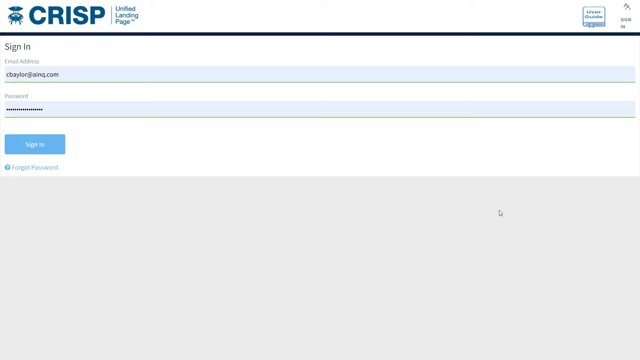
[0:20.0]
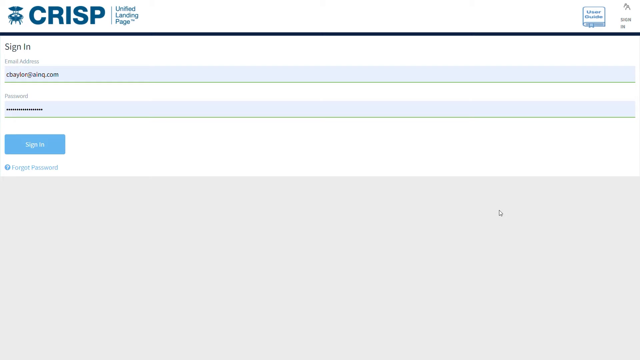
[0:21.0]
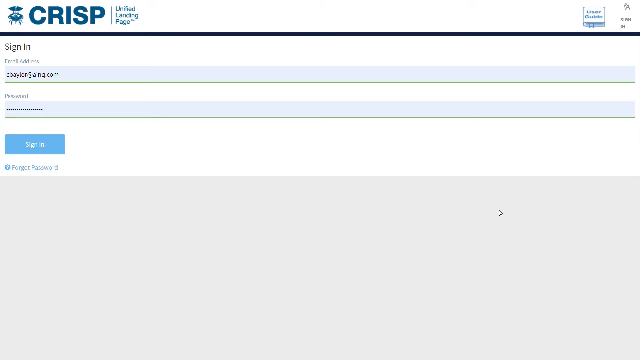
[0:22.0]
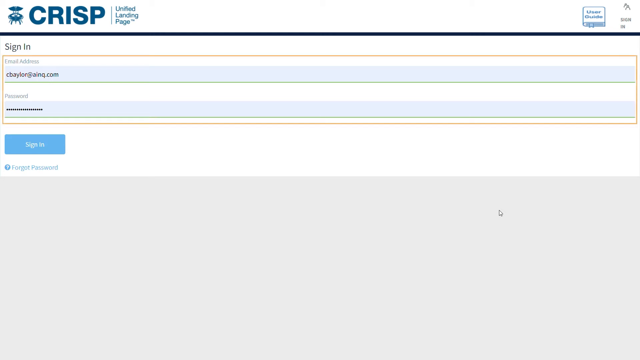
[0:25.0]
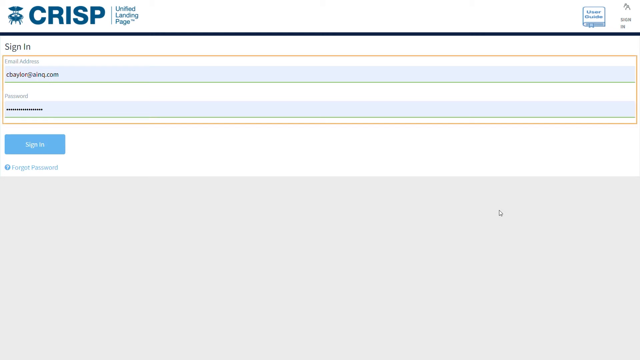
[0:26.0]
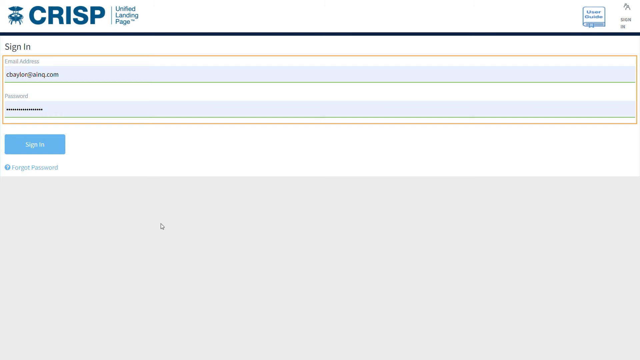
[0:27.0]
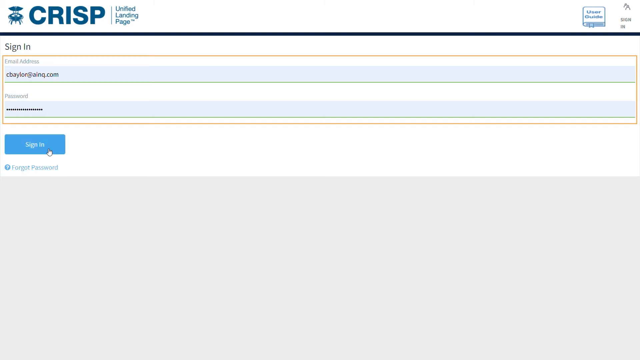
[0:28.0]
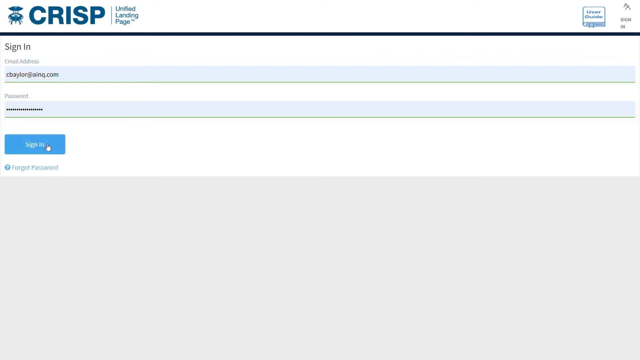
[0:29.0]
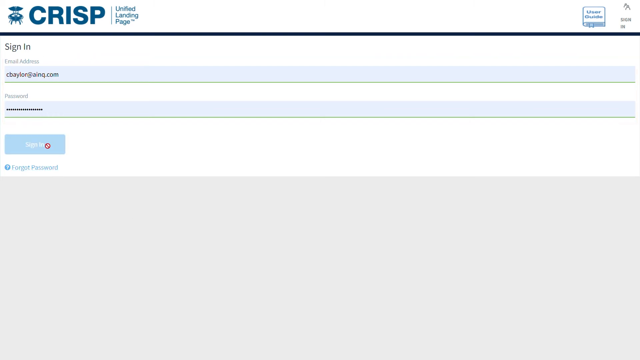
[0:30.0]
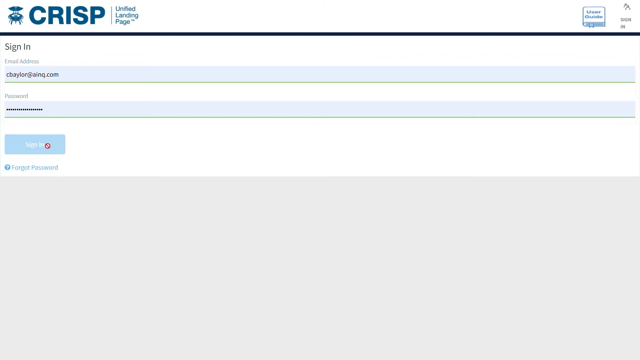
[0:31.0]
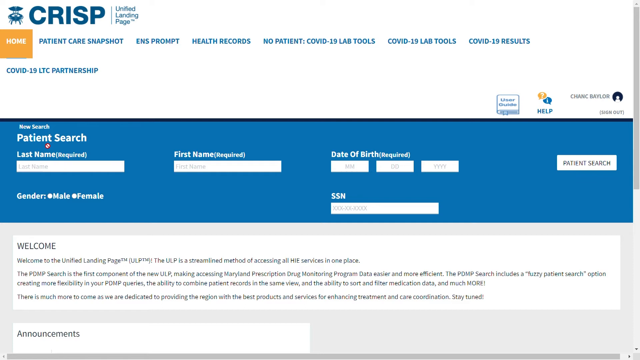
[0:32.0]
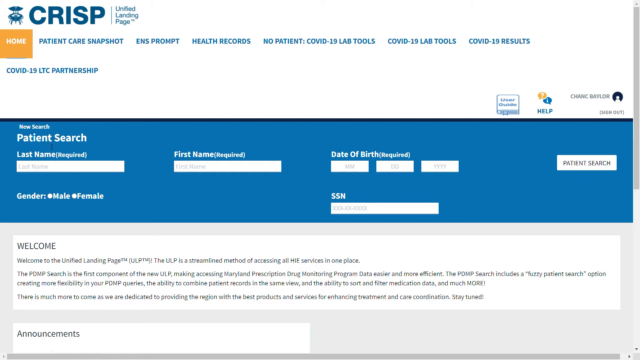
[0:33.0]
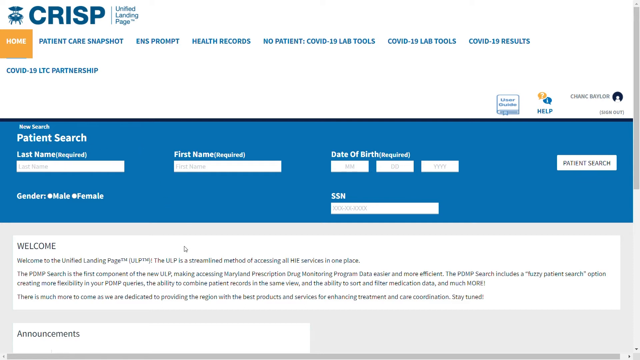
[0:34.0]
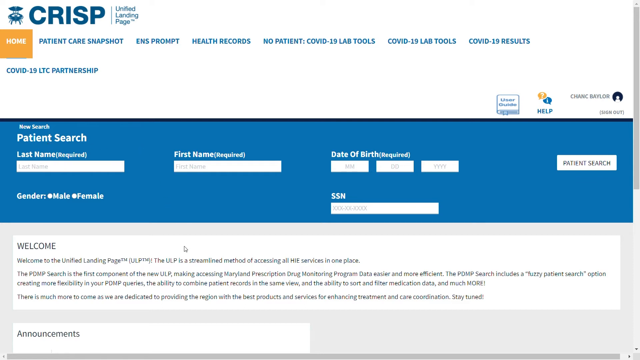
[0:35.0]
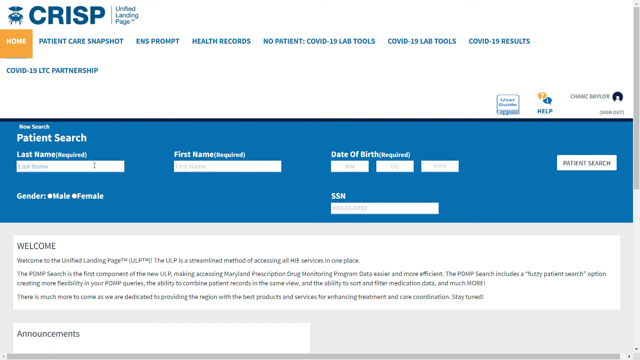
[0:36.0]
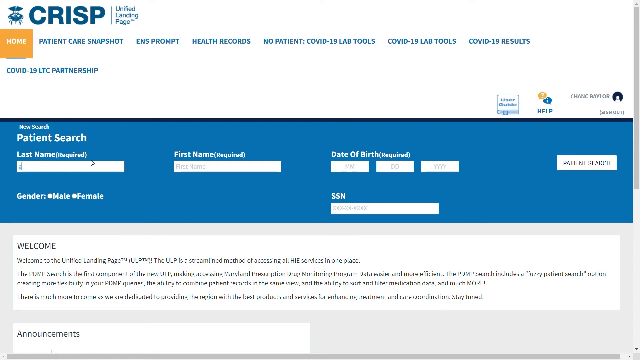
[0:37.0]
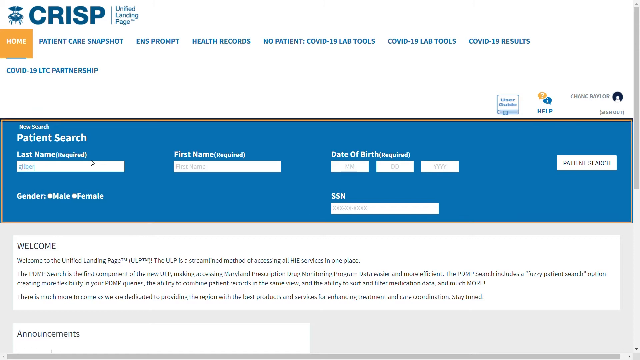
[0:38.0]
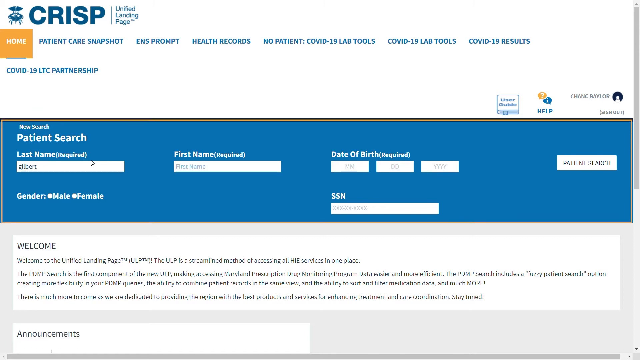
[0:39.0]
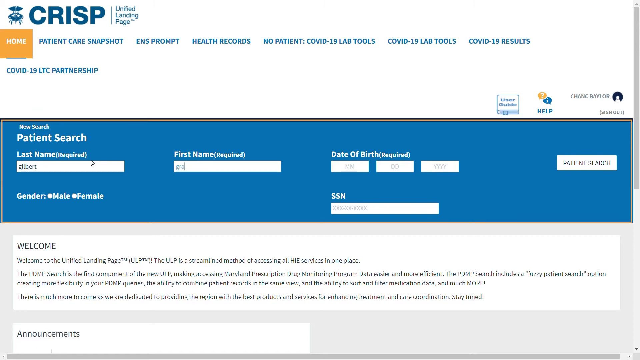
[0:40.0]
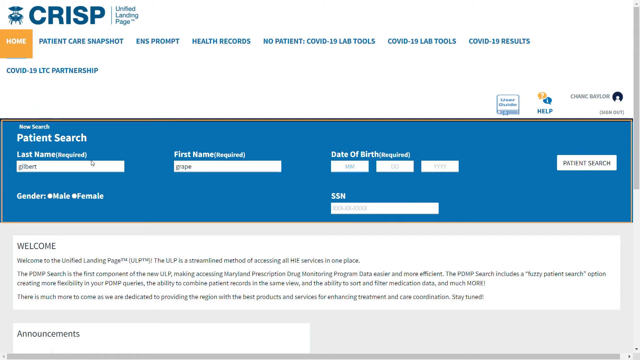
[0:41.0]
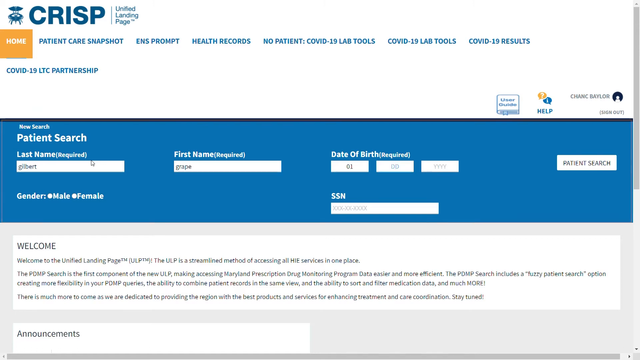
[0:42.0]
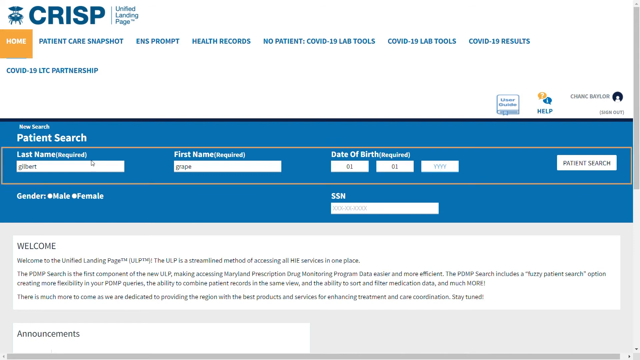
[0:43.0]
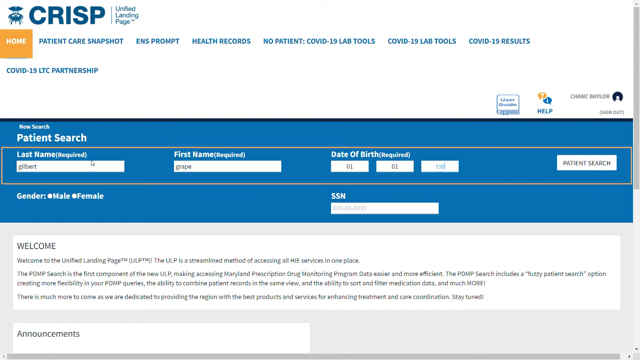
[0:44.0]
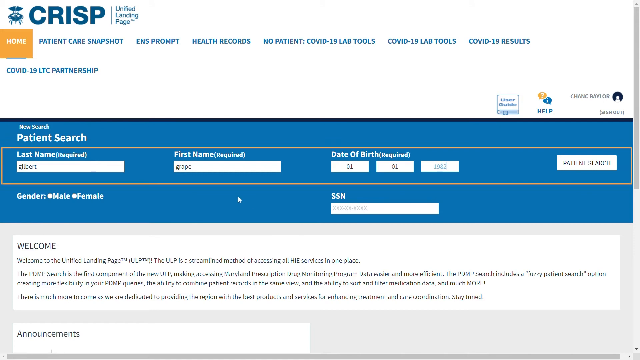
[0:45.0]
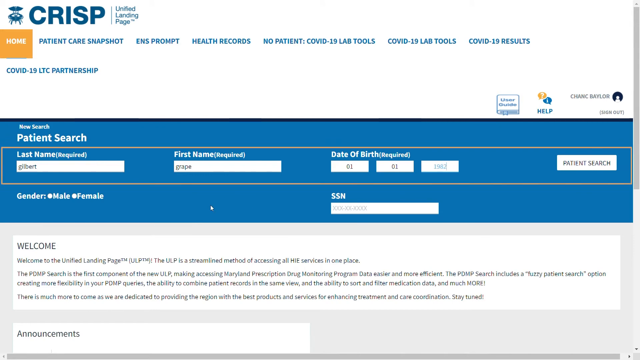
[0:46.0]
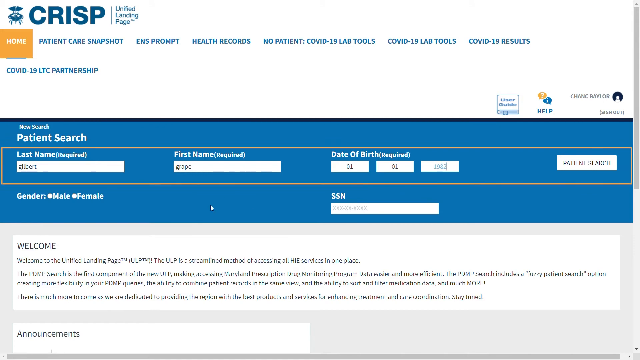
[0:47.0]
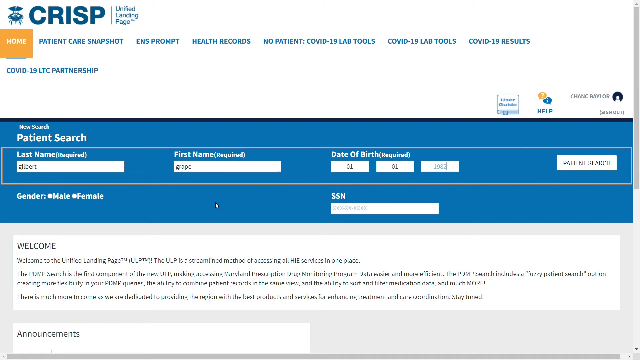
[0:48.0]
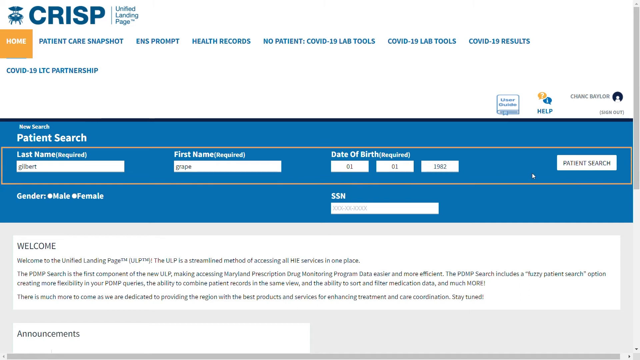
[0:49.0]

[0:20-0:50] The sign-in page has little on it: a sign-in option with empty password and email address fields. The header at the top left reads "CRISP United Landing page." A cursor clicks sign-in, which leads to a patient search page reading "patient search," with fields for last name (required), first name (required), birth date (required) and social security number, plus a welcome paragraph. The patient search section is in blue. The cursor moves and then stops. An example is typed in, search is clicked, and the page stops there. The video then returns to the sign-in page.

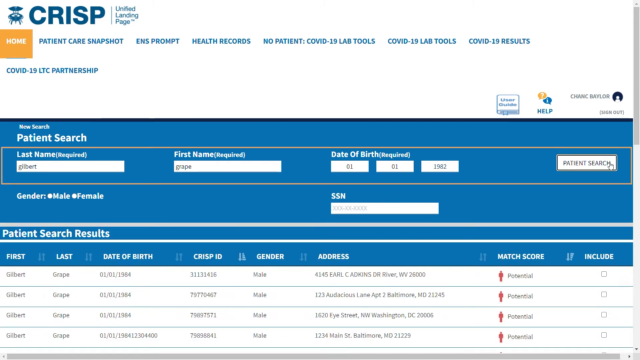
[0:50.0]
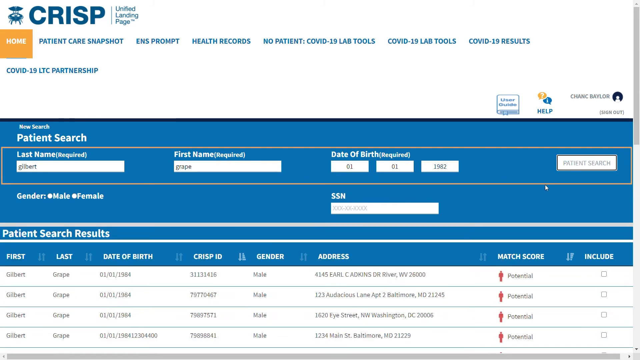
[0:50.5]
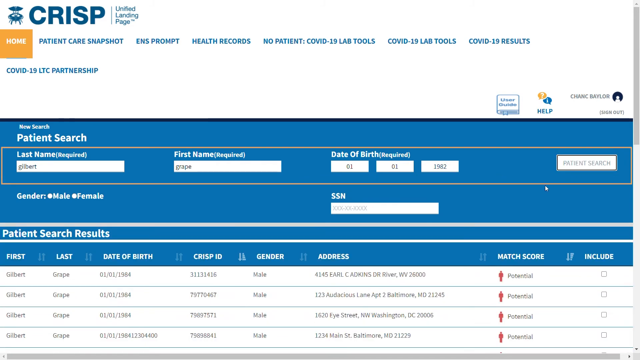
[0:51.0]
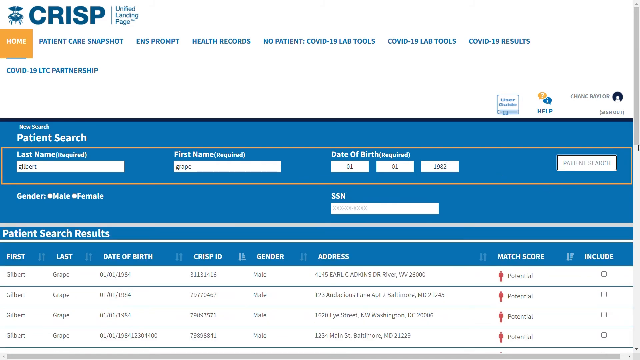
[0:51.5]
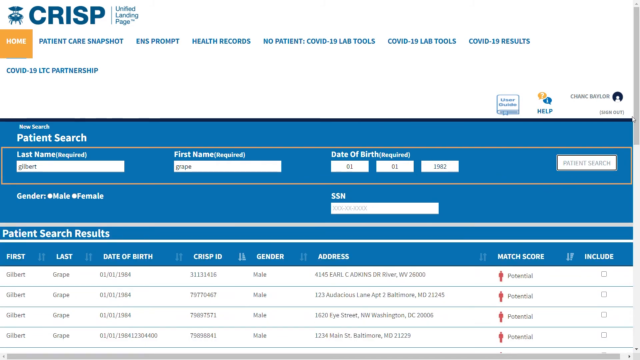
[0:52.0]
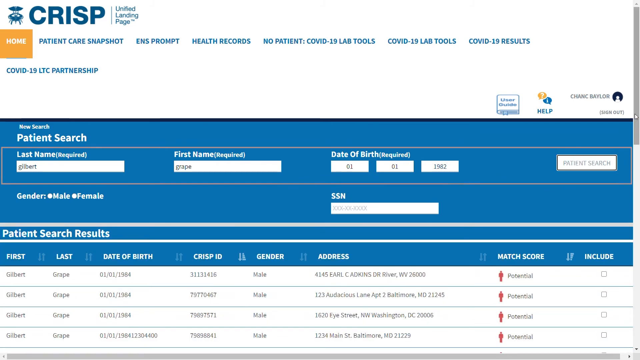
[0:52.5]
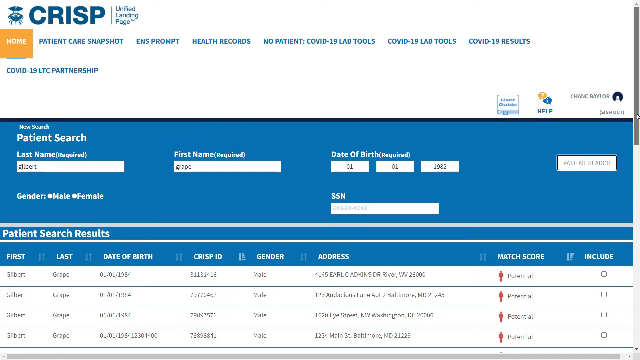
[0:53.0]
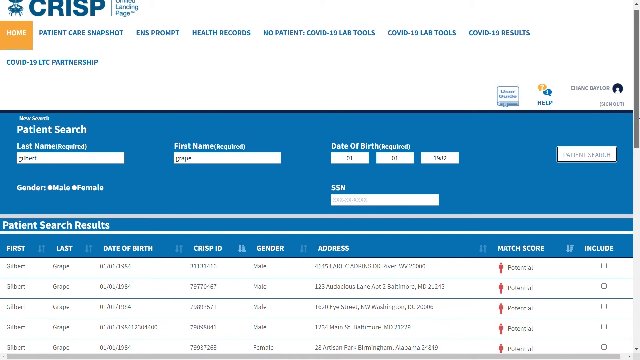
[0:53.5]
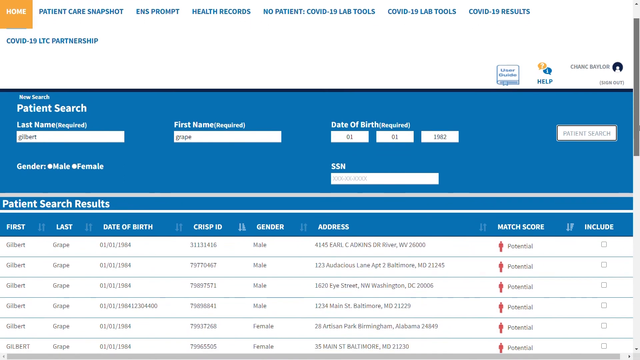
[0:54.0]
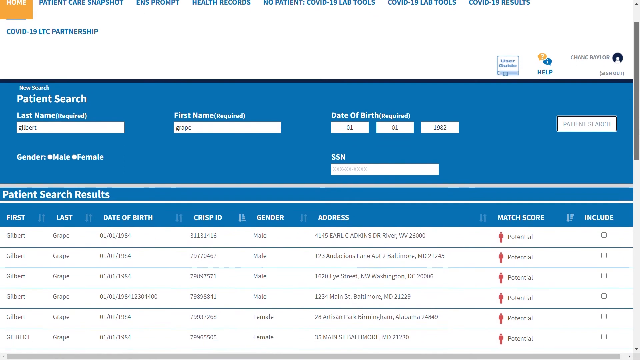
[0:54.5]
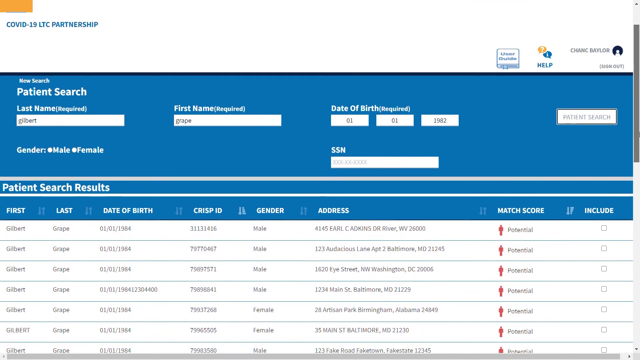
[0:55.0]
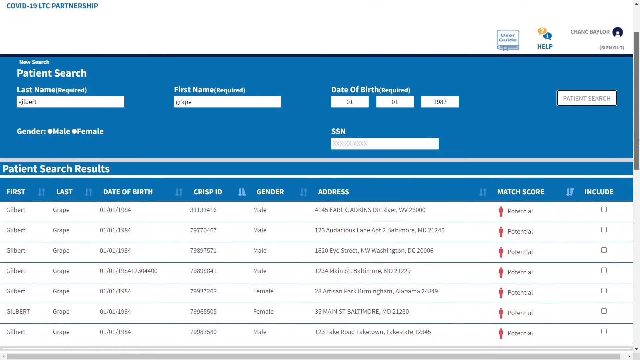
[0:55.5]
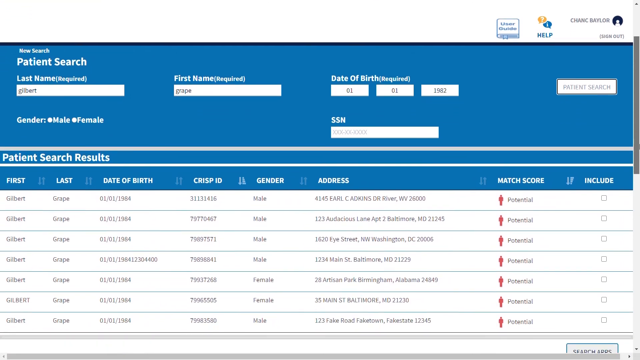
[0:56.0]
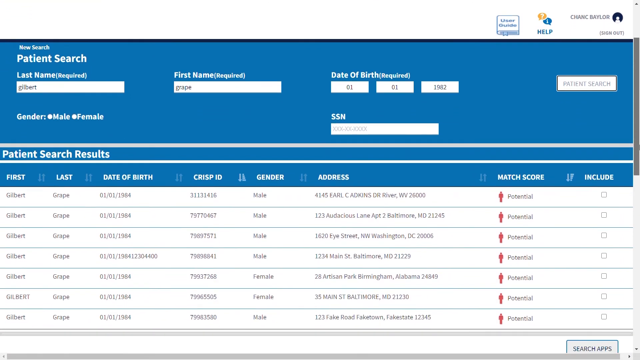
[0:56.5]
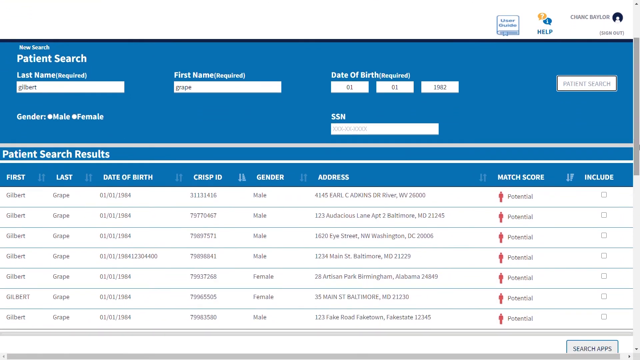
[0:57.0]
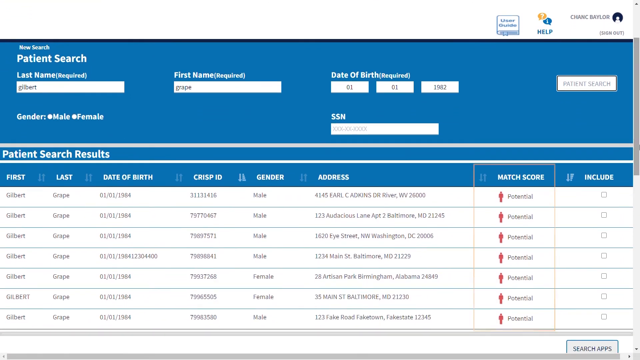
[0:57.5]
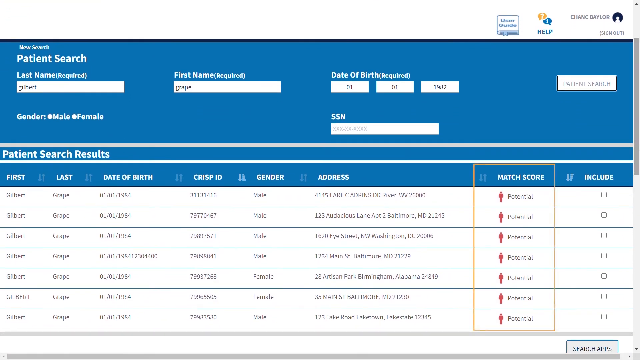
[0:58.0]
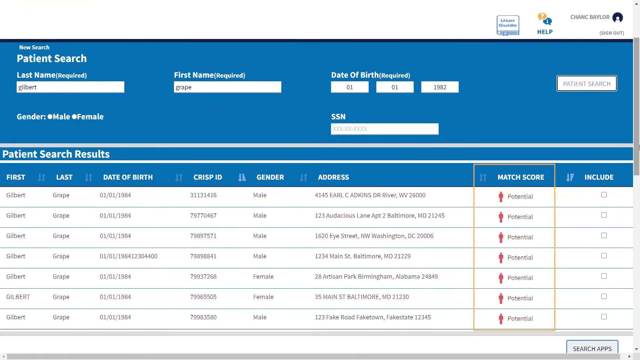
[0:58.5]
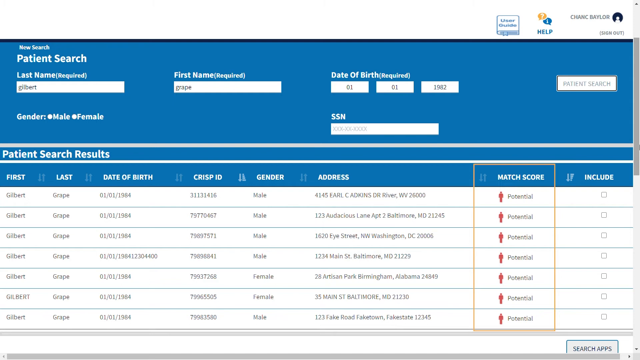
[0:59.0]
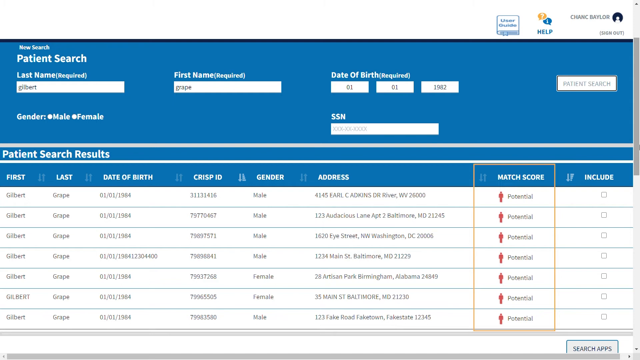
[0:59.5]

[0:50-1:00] The patient search page shows a name that appears to read "Gilbert Grape," with Grape as the first name and Gilbert as the last name. The patient search section is in blue and the highlighted boxes are white. A lot of text is written at the bottom: numbers and letters, male or female, numbers, last name, date of birth and similar details, and the page scrolls up.